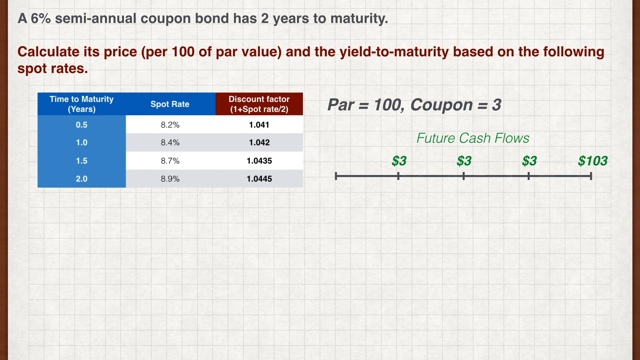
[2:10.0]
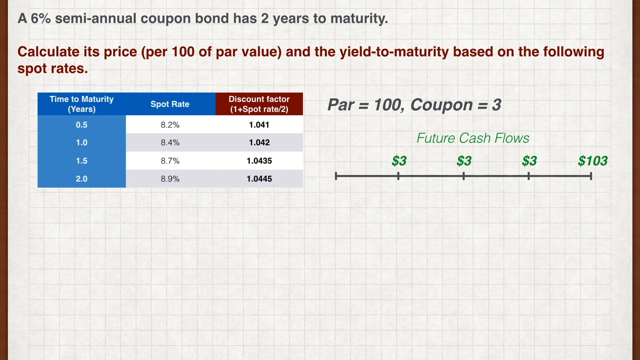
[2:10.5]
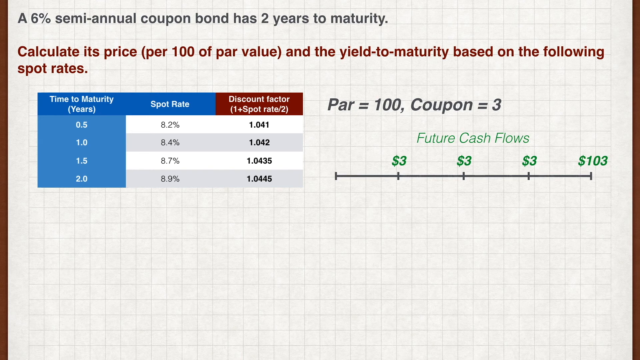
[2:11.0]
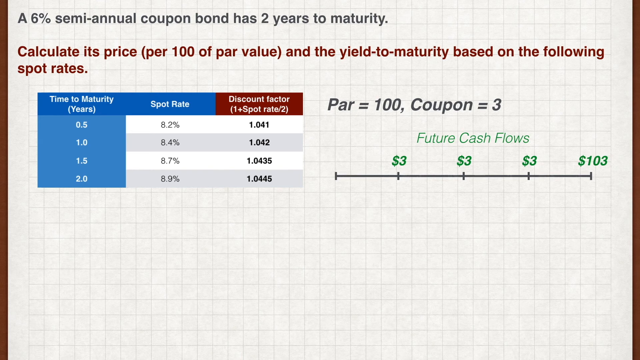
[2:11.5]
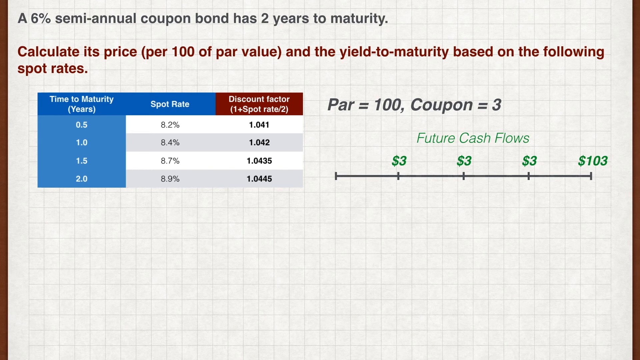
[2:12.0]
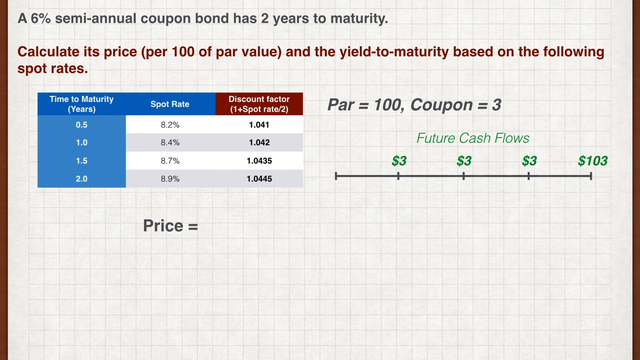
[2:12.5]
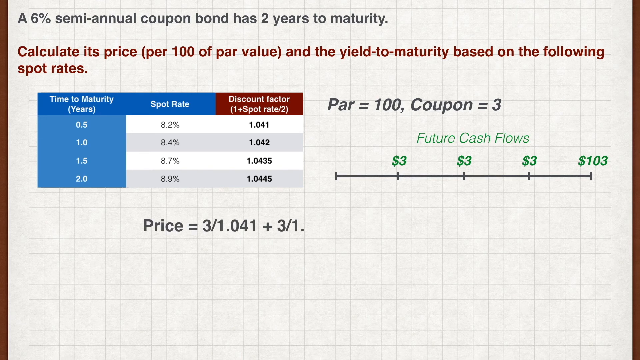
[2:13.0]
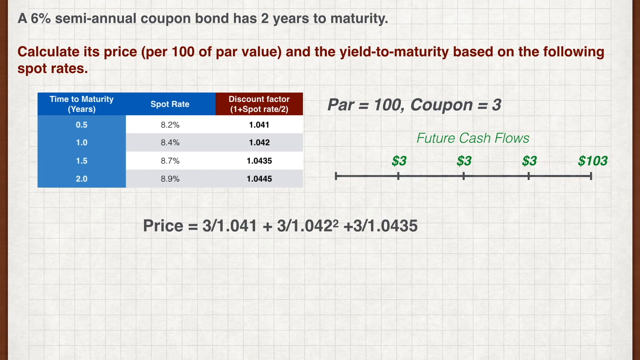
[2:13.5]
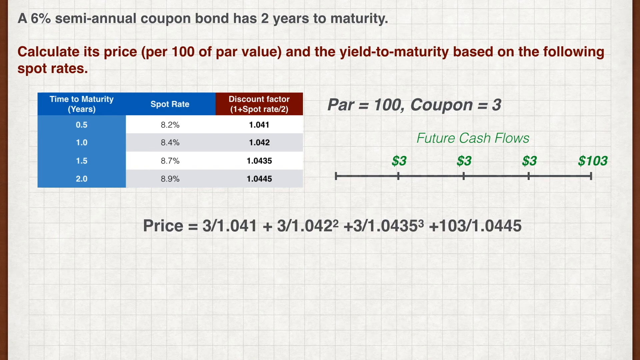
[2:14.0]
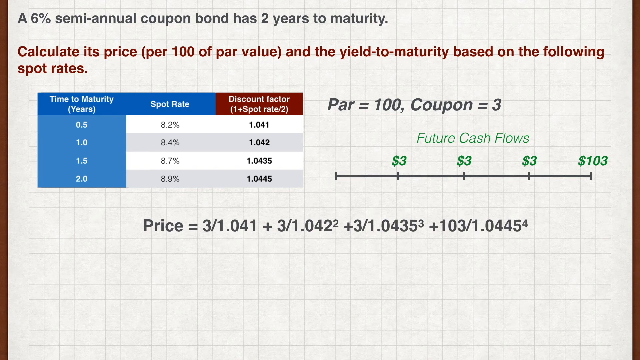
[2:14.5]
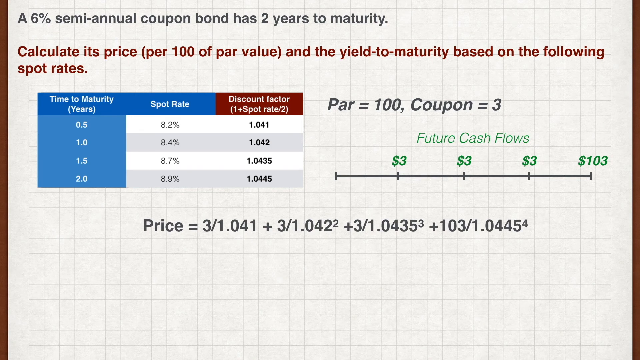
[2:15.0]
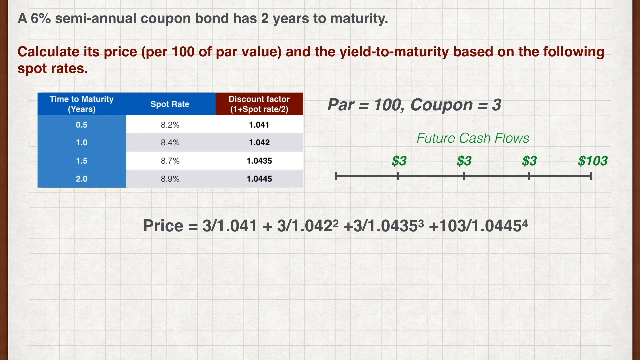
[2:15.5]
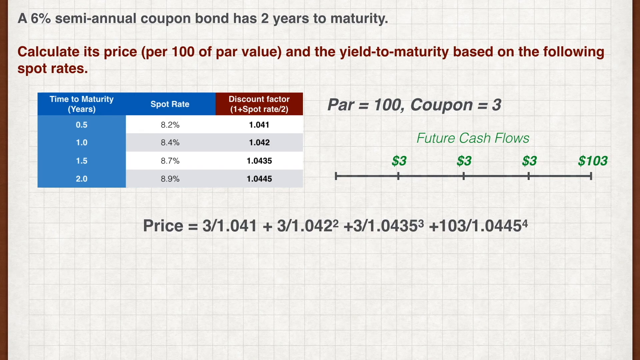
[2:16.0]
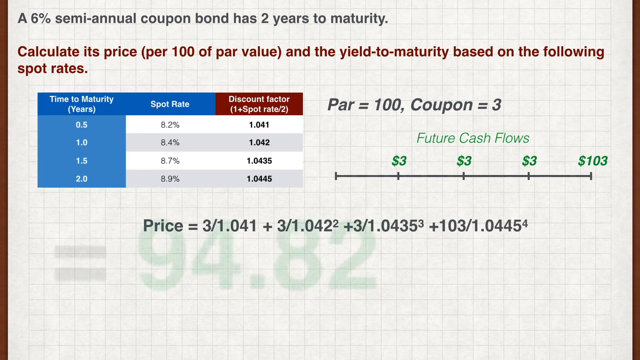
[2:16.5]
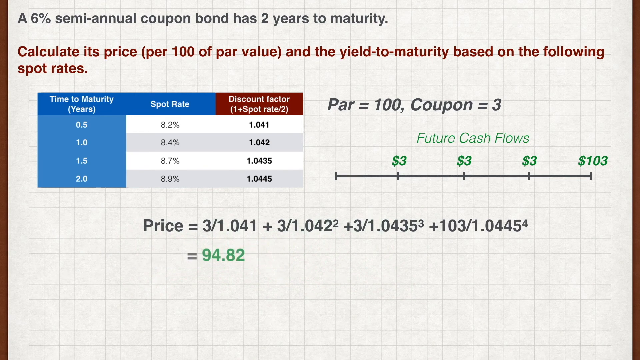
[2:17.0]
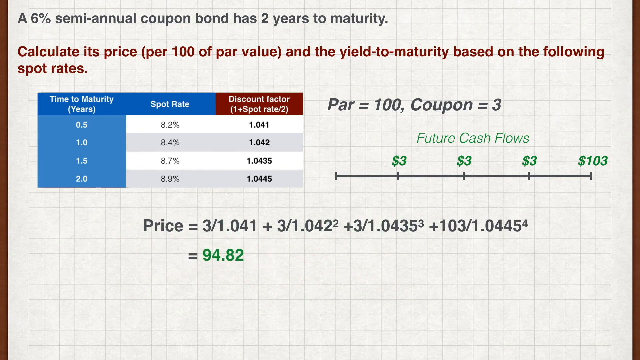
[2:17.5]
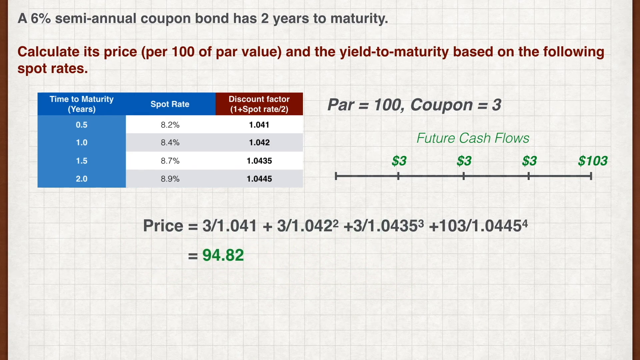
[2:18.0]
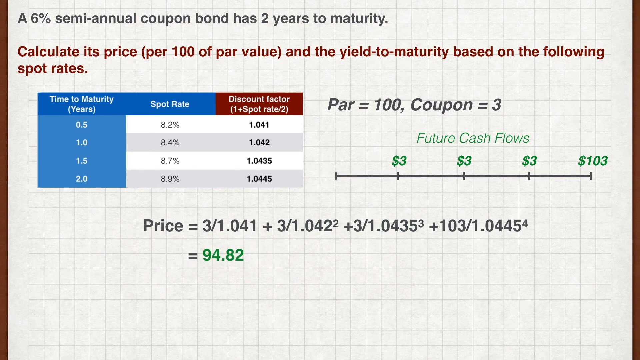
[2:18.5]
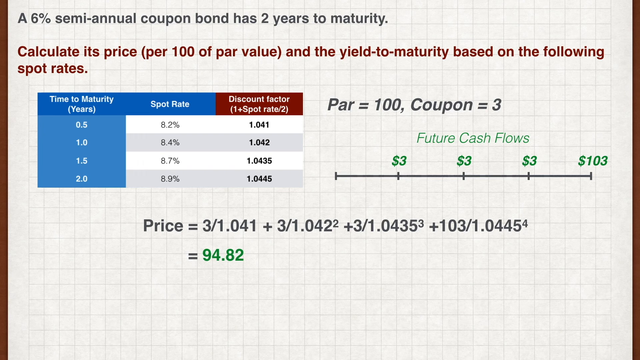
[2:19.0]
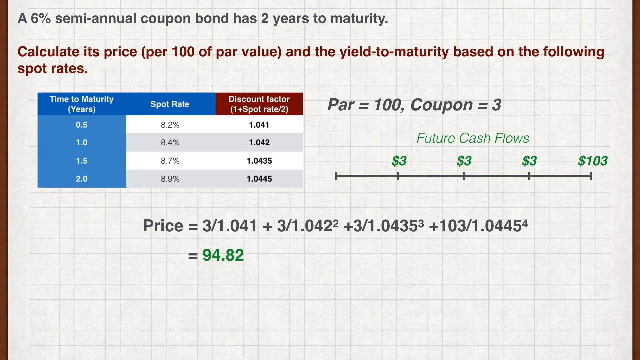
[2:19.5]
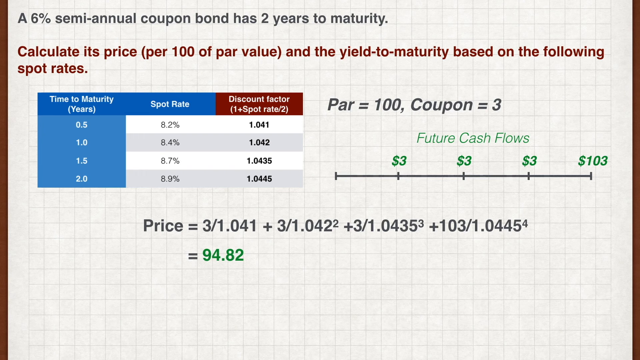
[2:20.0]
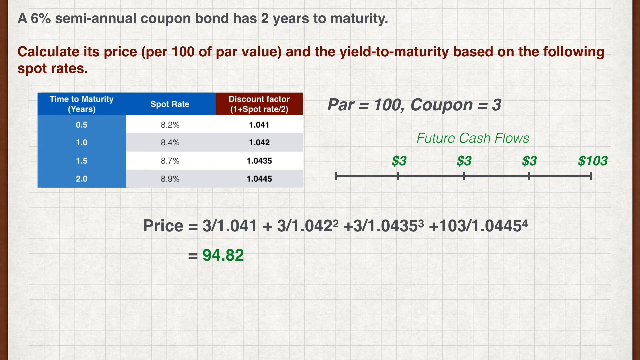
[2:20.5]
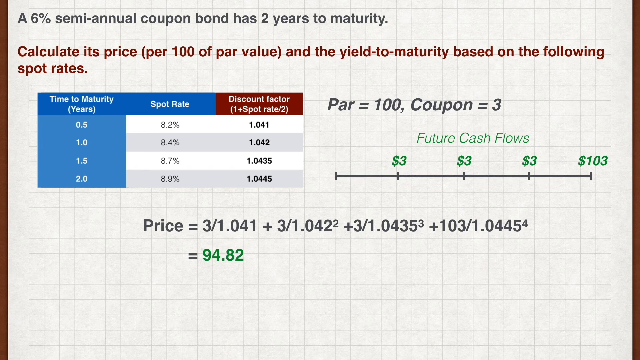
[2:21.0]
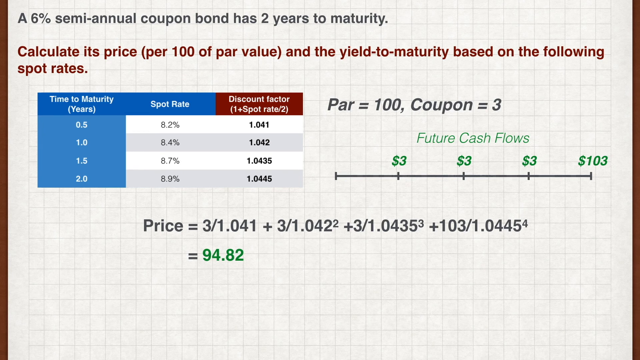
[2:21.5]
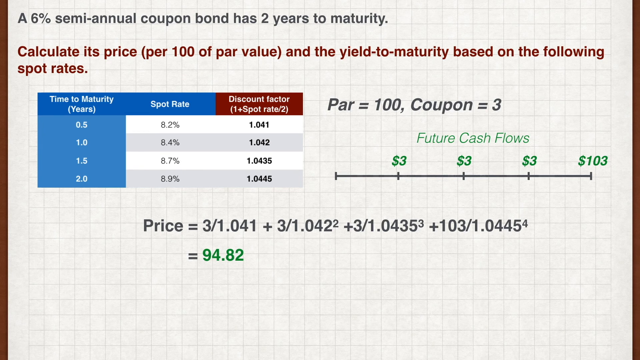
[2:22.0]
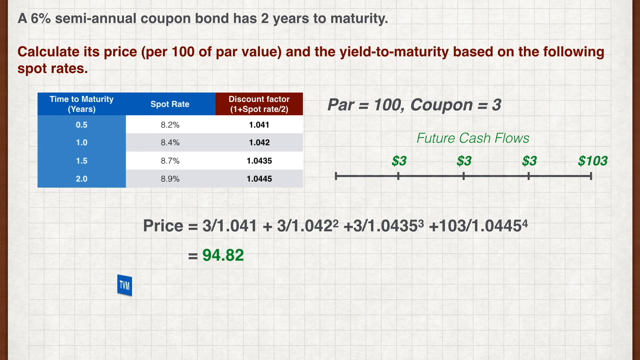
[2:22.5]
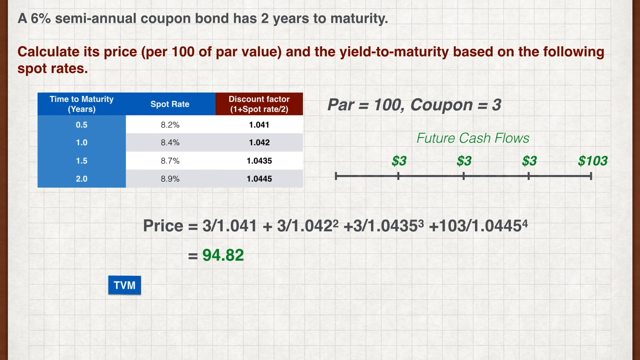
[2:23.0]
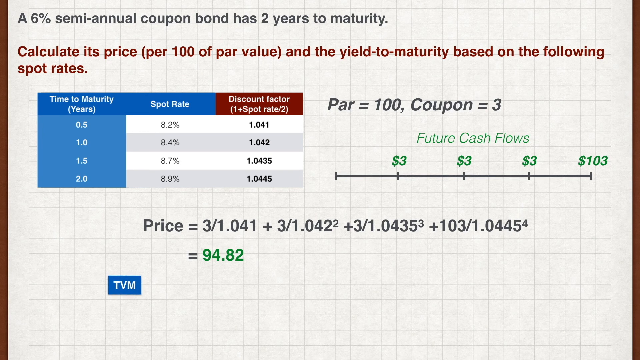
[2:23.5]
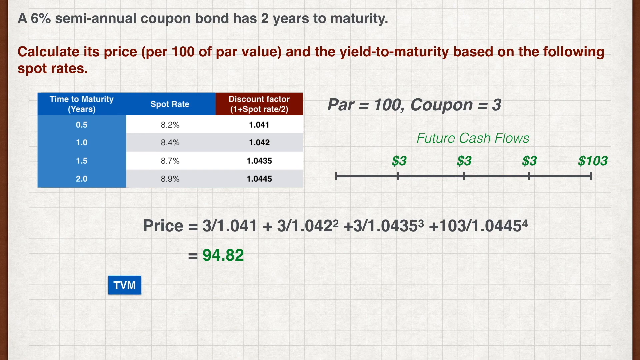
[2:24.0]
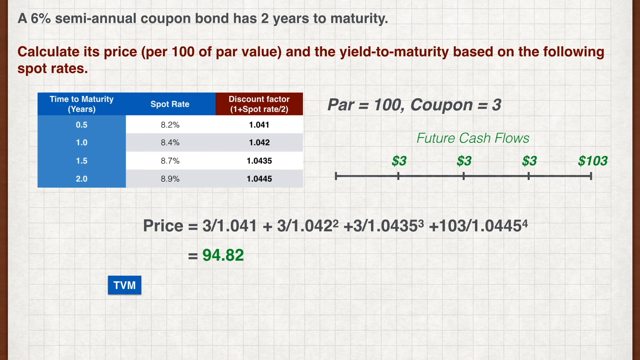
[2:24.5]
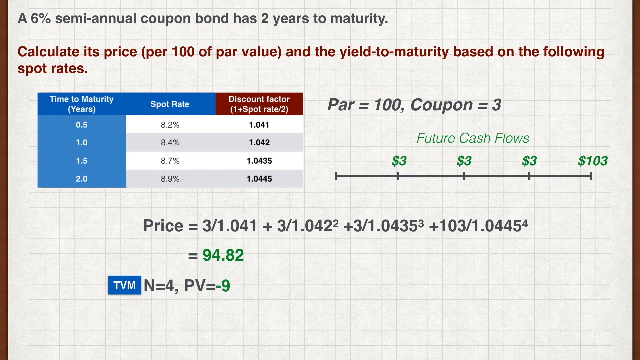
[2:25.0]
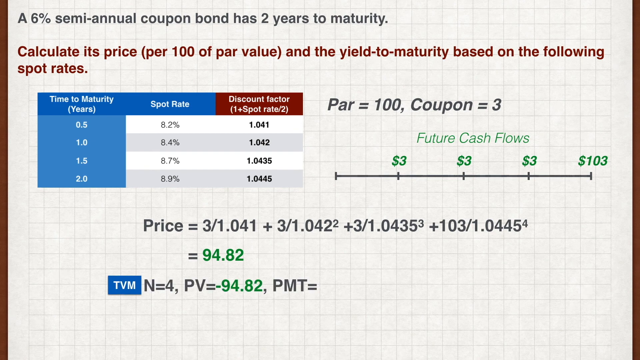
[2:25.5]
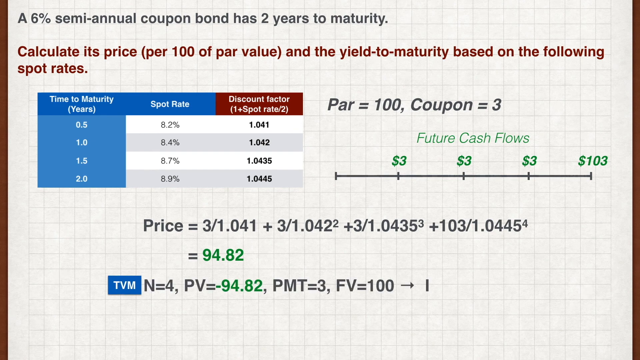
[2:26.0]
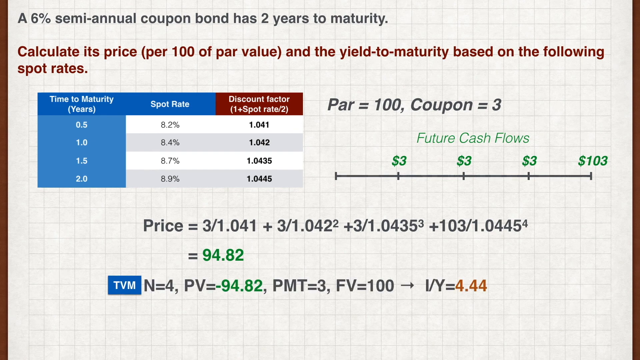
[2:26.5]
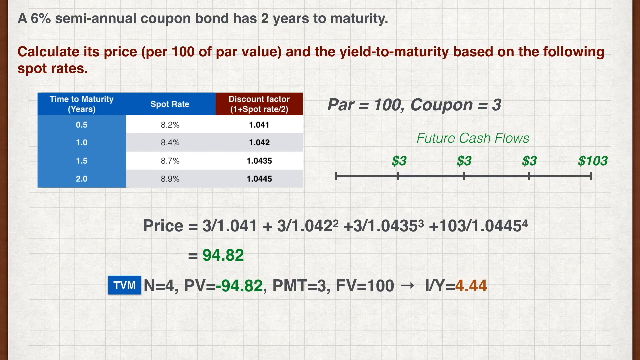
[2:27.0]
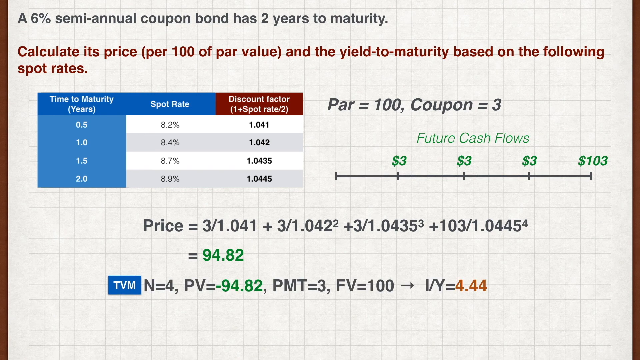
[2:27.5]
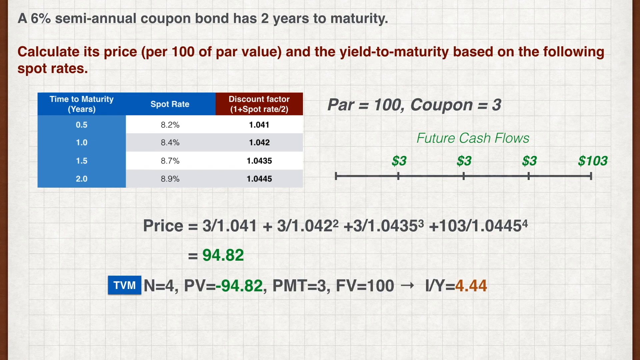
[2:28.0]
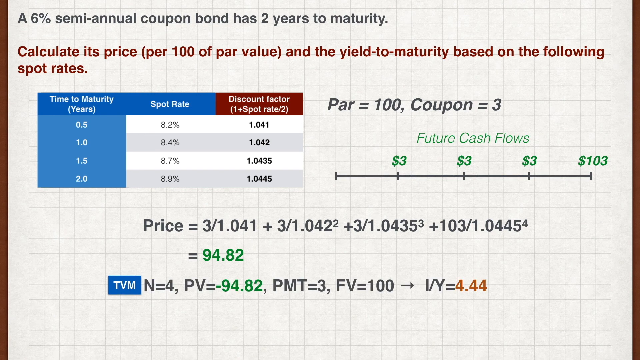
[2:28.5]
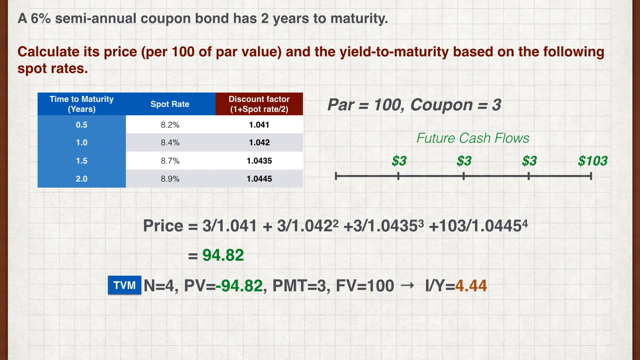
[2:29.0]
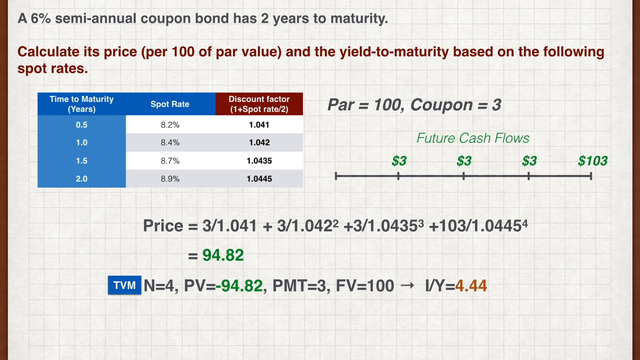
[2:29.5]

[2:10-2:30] The same chart with time to maturity, spot rate and discount factor is shown. At the top of the page, text still refers to a 6% coupon bond with 2 years to maturity, and the page deals with calculating the yield to maturity based on the spot rates. R = 100 and coupon = 3 remain, with the future cash flow chart. Two more equations appear: price = 3 / 1.041 + 3 / 1.042 squared + 3 / 1.0435 squared + 103 / 1.0445 to the 4th, which apparently equals 94.82. Another equation at the bottom reads N = 4, PV = -94.82, PMT = 3, FV = 100, and a tiny arrow facing right leads to I/Y = 4.44.